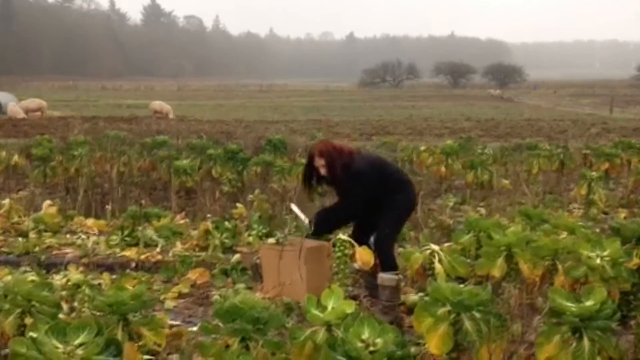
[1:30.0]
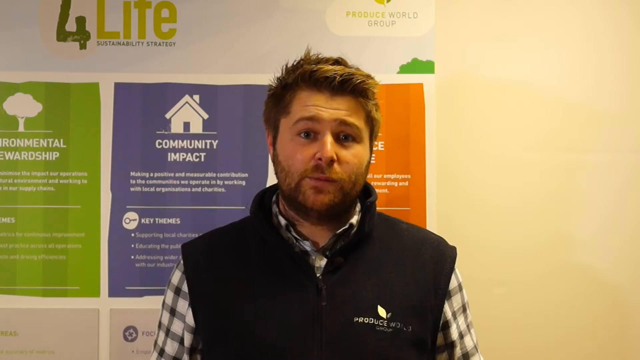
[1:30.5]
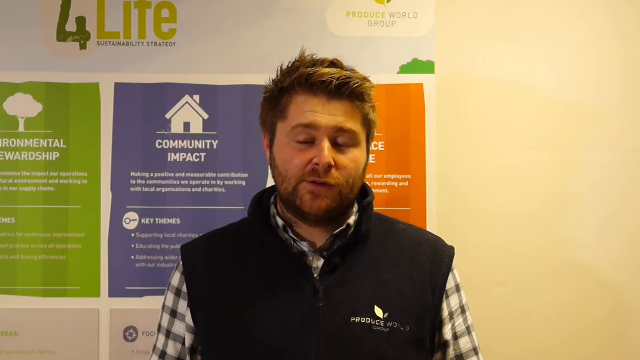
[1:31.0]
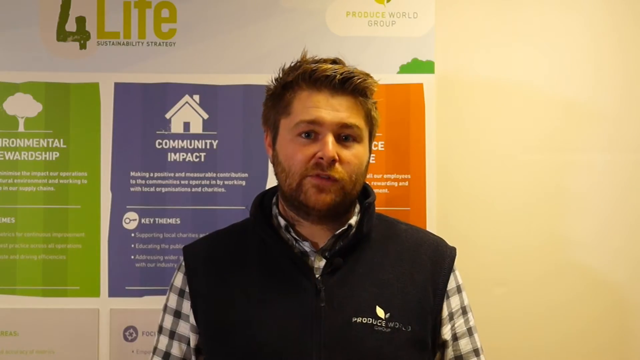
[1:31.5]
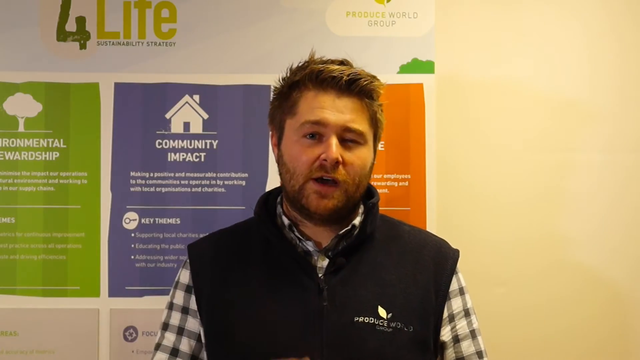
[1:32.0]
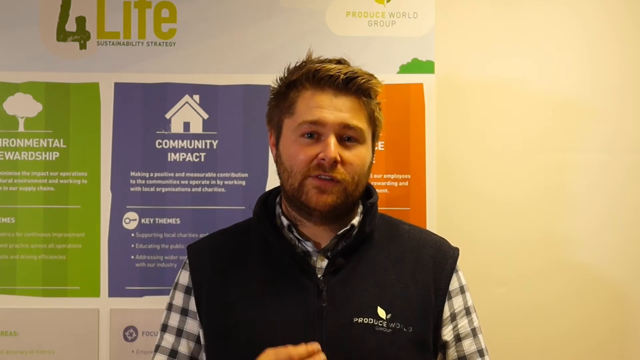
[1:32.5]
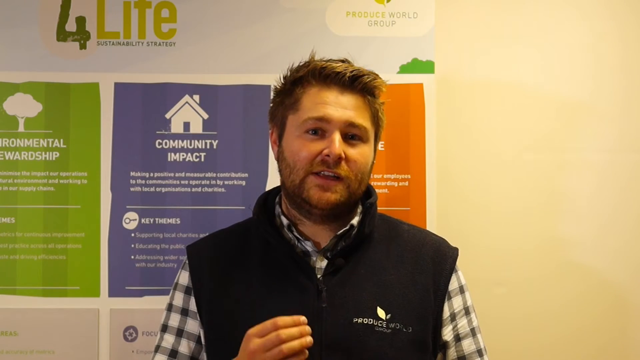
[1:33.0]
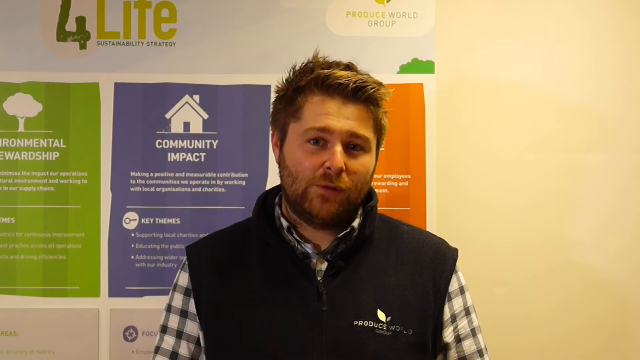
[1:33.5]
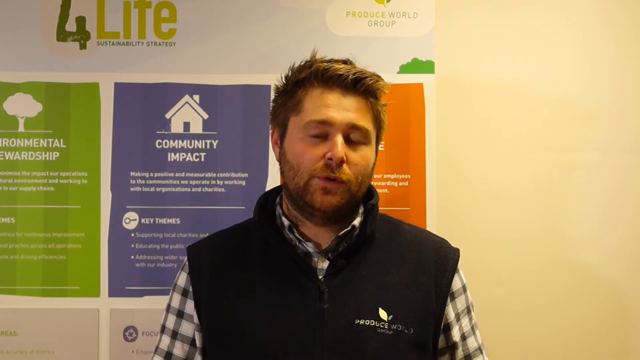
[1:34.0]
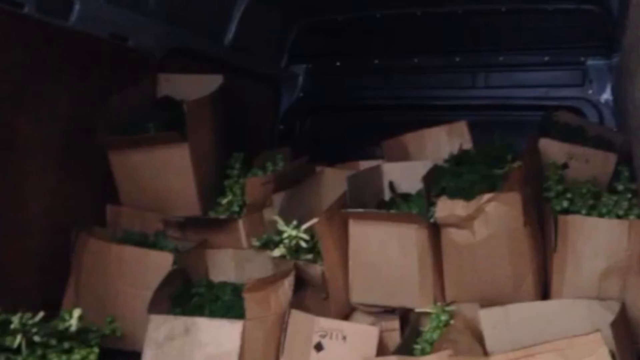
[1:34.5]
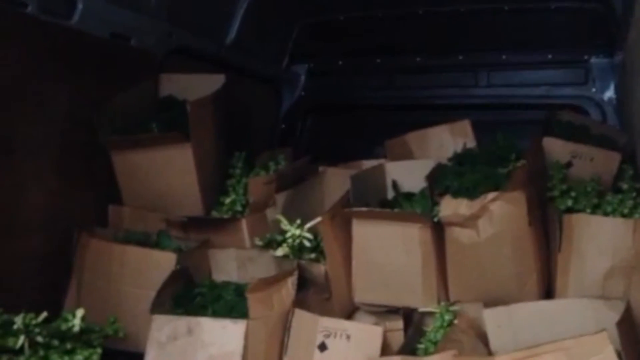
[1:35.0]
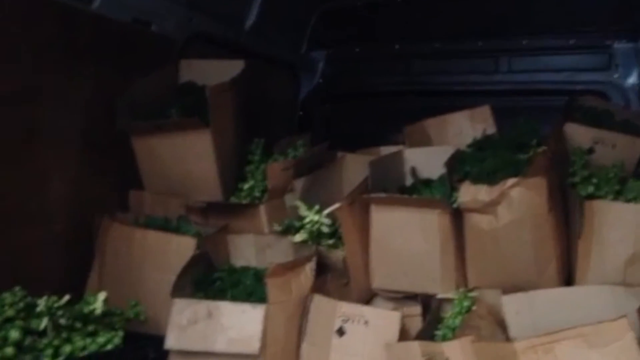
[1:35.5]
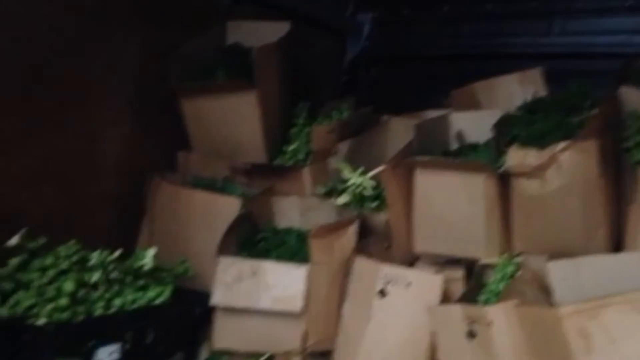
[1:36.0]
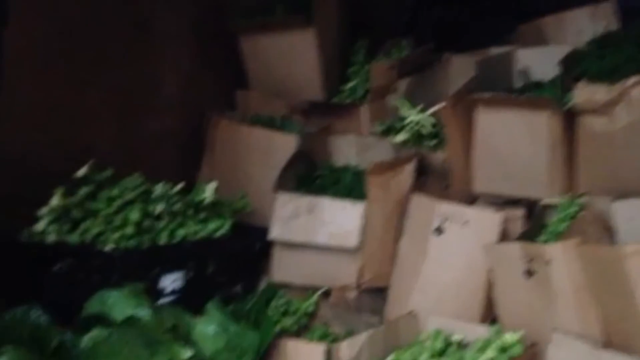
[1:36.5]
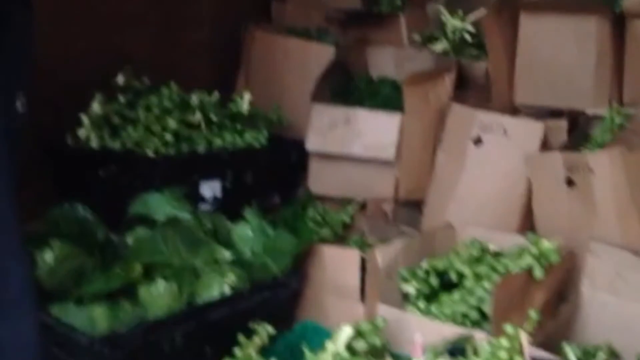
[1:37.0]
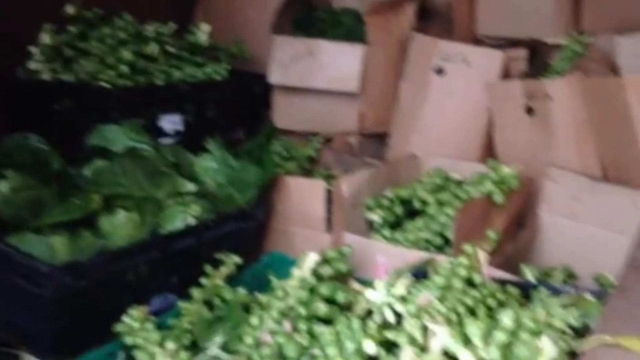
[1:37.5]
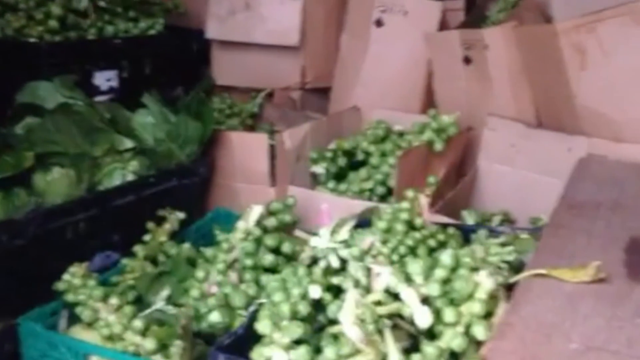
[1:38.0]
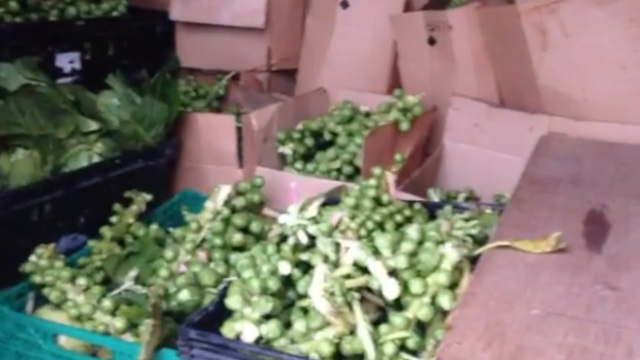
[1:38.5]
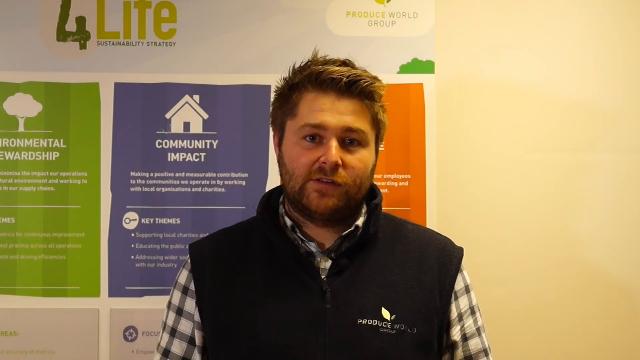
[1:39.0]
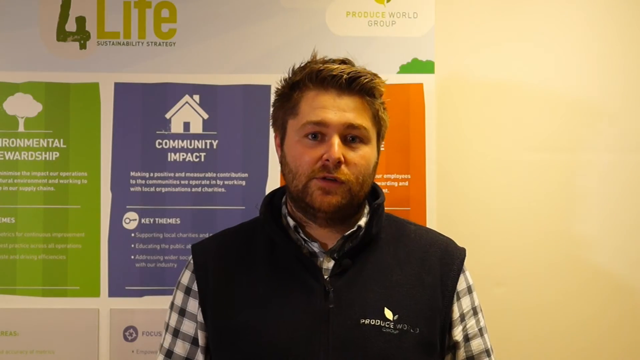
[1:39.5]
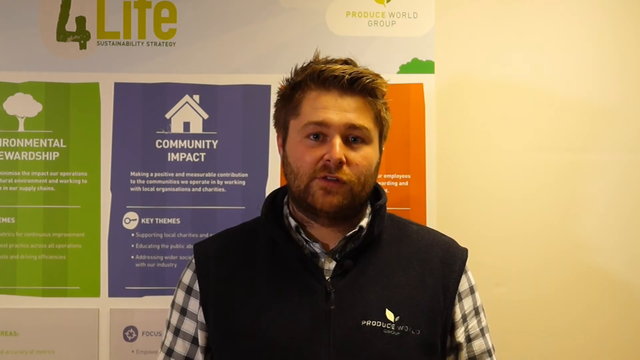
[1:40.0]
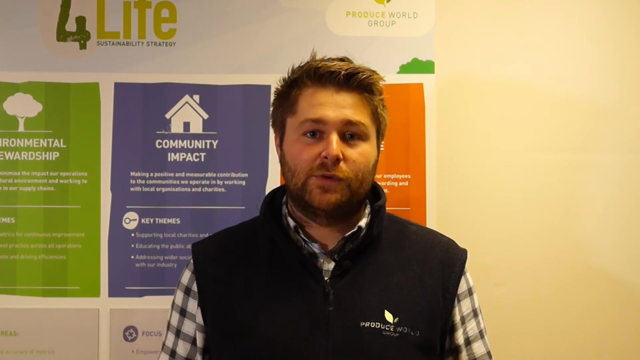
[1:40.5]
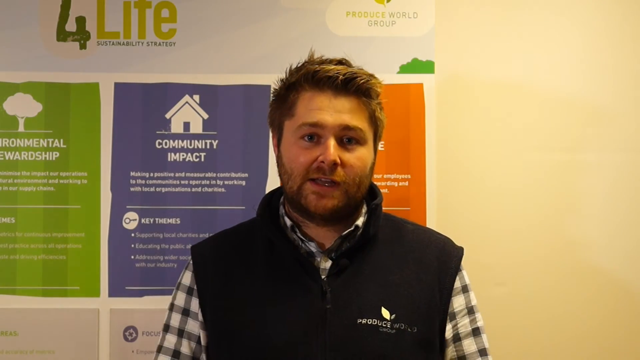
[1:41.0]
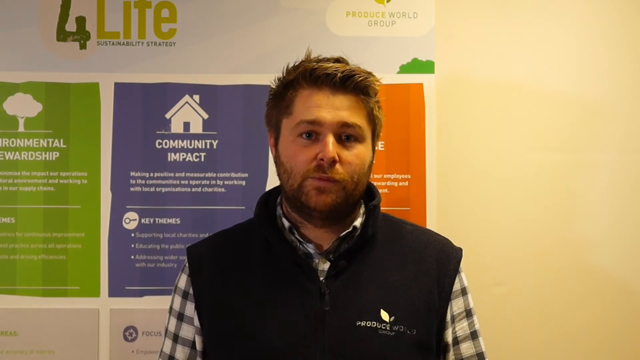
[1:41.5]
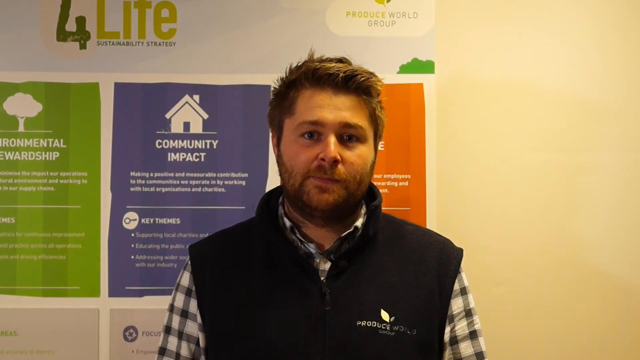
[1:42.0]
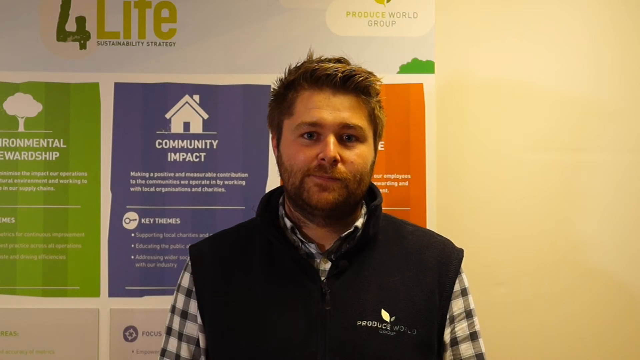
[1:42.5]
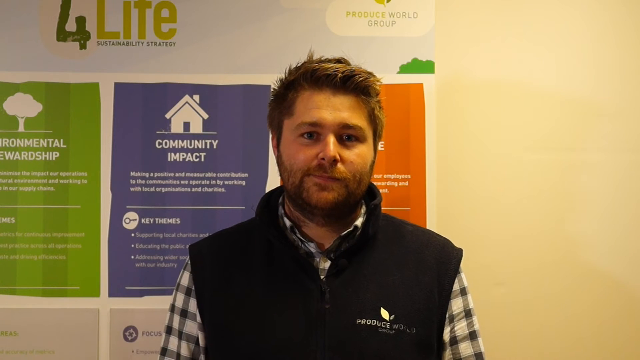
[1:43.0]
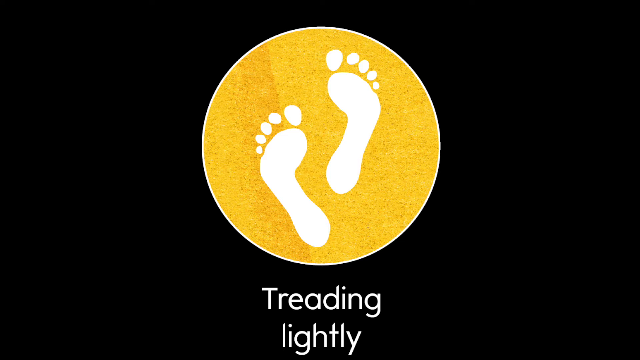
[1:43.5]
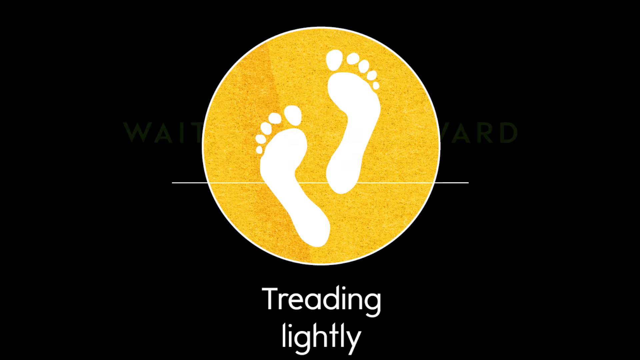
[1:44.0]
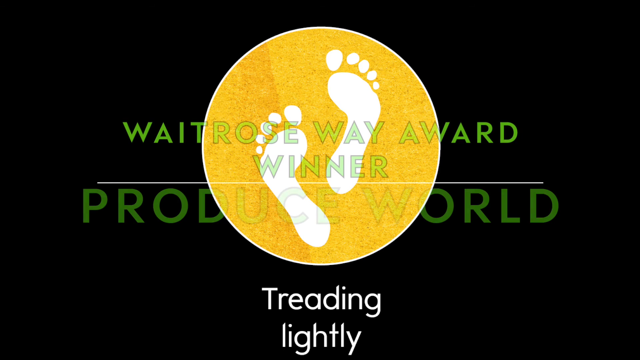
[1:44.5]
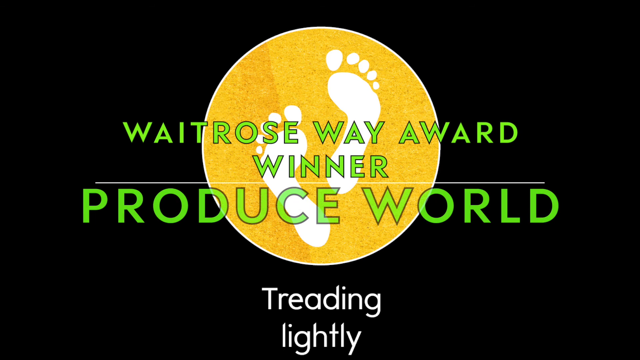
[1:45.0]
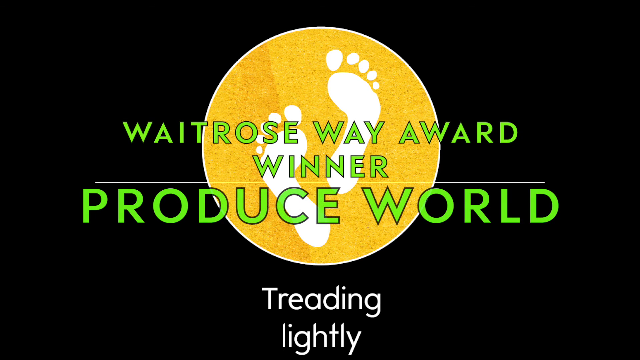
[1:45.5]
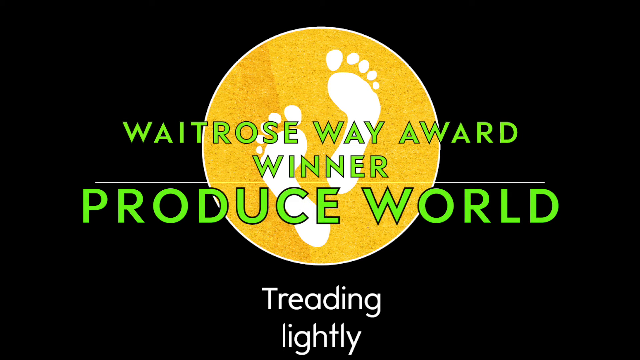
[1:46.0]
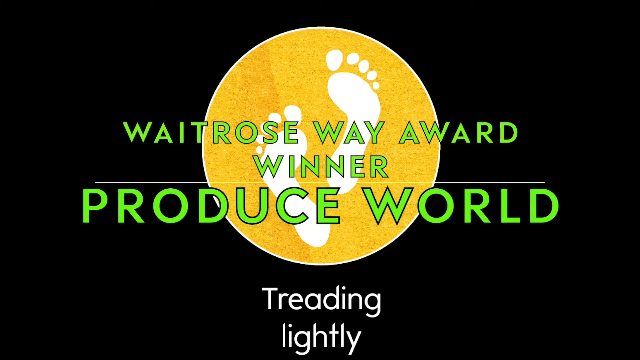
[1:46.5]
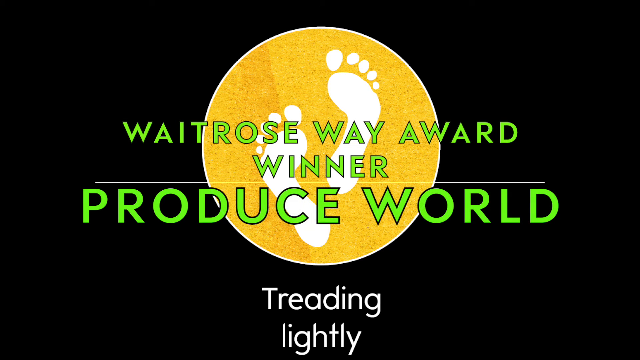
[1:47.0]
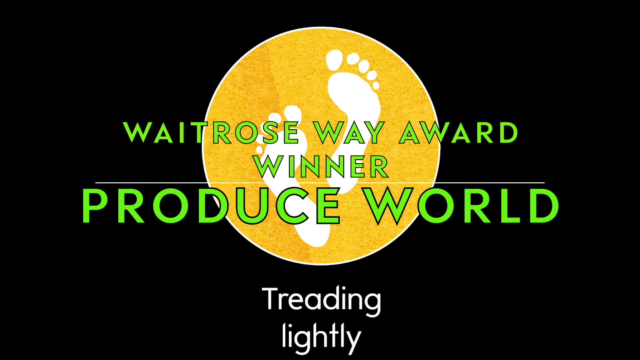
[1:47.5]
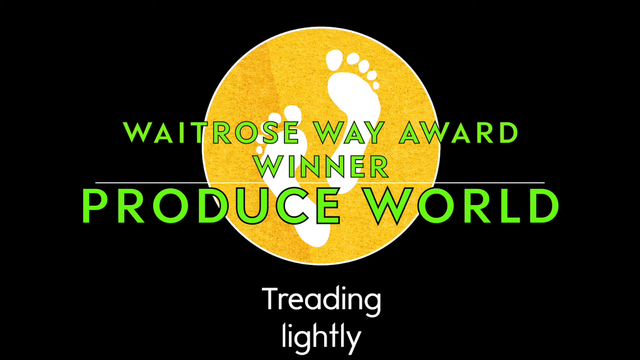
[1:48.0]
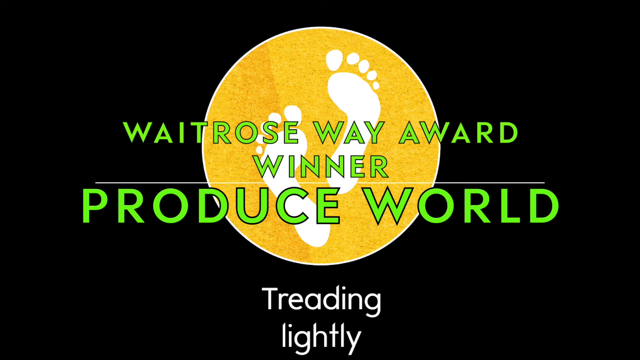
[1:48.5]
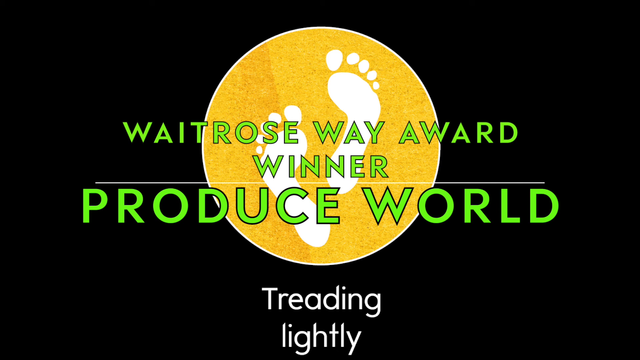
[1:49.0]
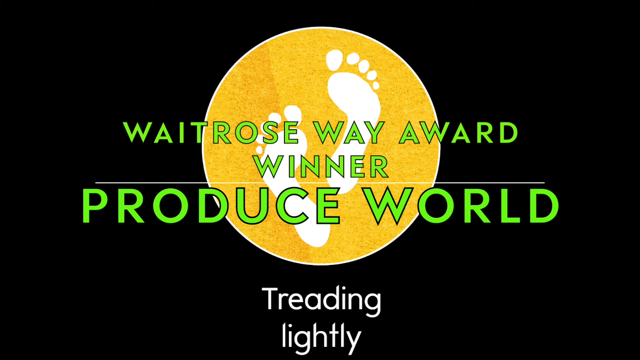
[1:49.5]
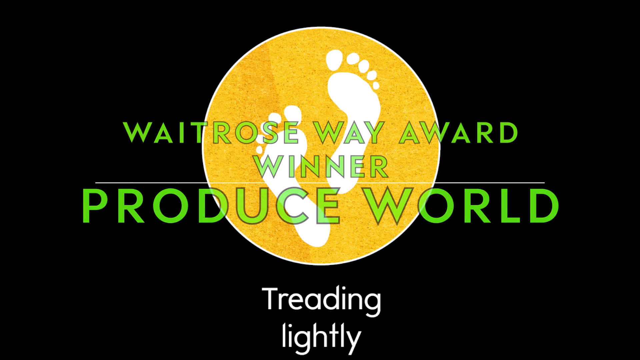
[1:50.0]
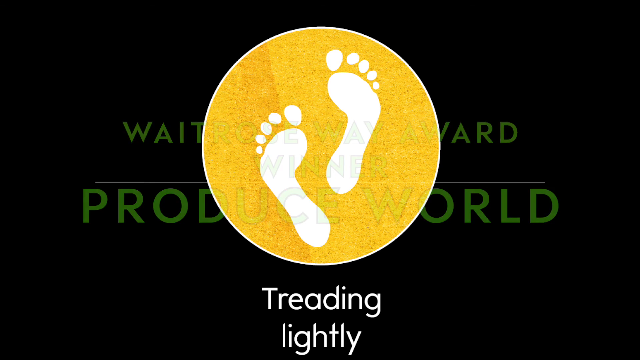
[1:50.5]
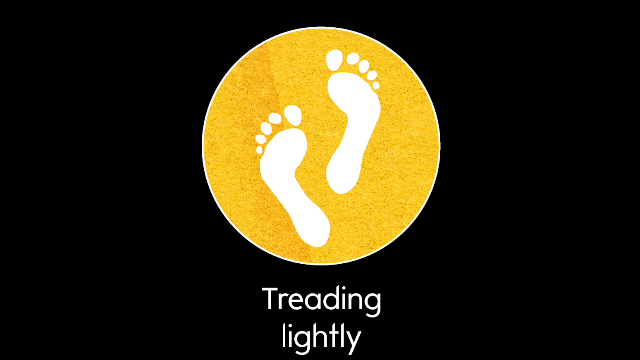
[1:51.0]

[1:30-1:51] A female worker puts some plants into a box; they appear to be brussels sprouts and look ready to harvest. She cuts off some of the stems. The view pans back to Guy Thallon talking to the camera, with the four life sustainability strategy behind him. Boxes of produce follow, apparently brussels sprouts, with small green bulb-like circular vegetables. The view pans back to Guy Thallon talking to the camera. The video ends with a yellow circle with footprints in it and "tread lightly" underneath, and the words "Waitrose way award winner produce world" appear in green.